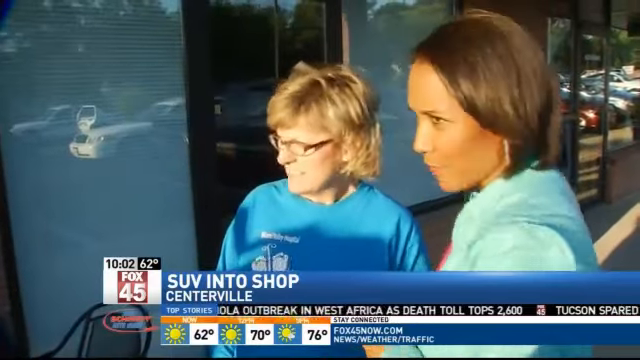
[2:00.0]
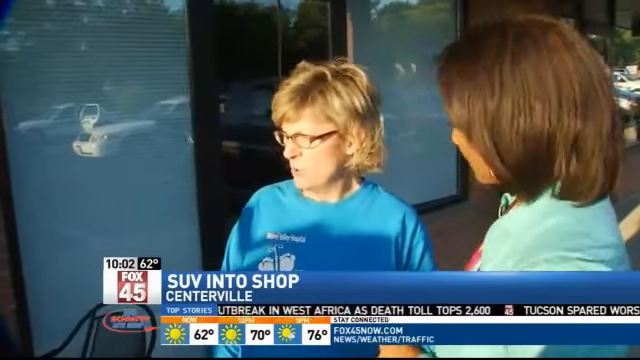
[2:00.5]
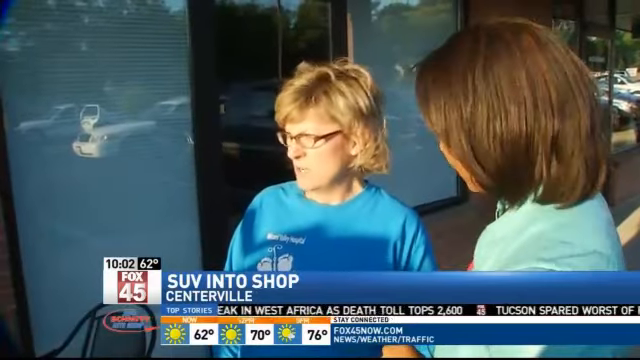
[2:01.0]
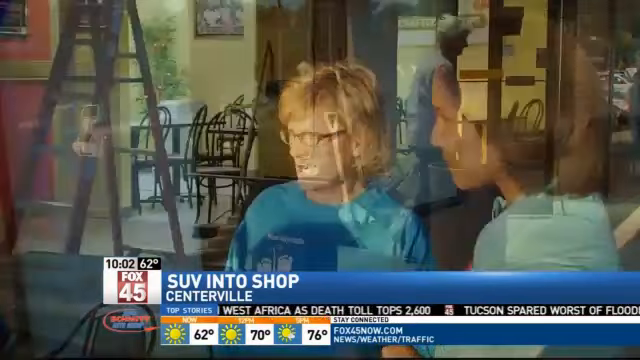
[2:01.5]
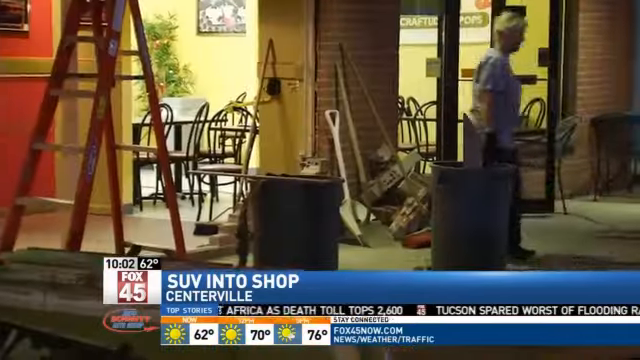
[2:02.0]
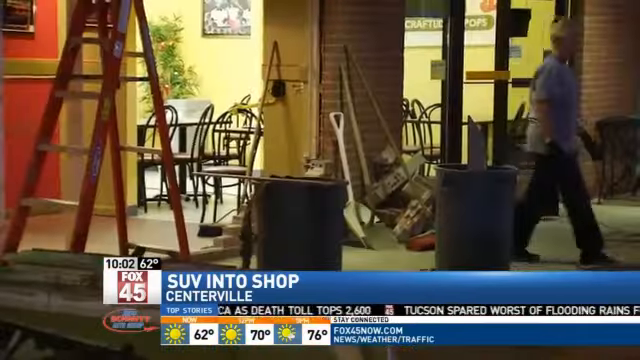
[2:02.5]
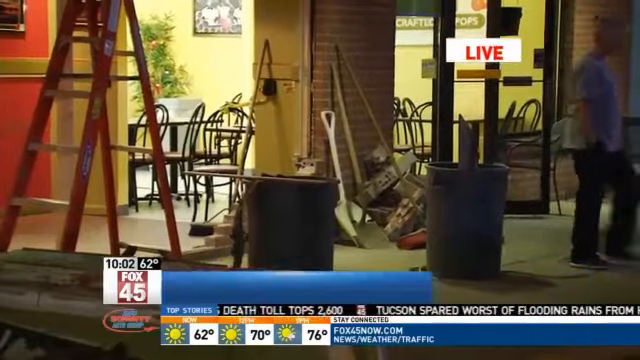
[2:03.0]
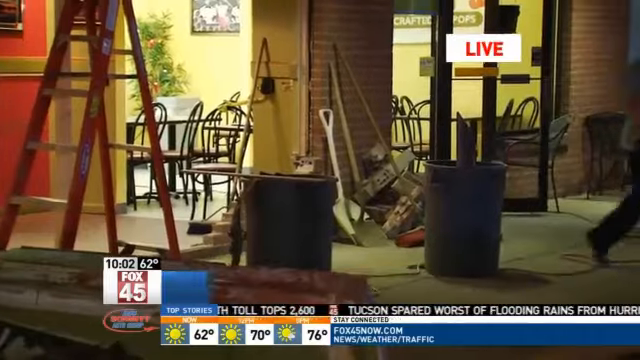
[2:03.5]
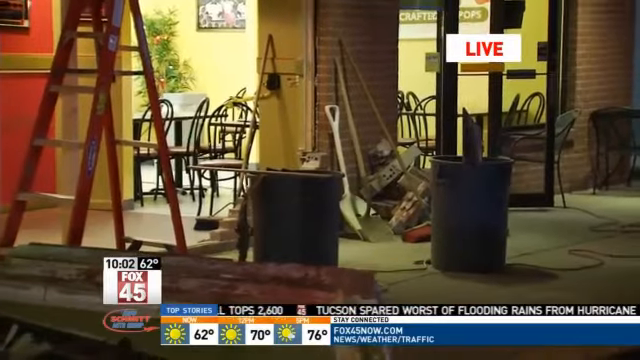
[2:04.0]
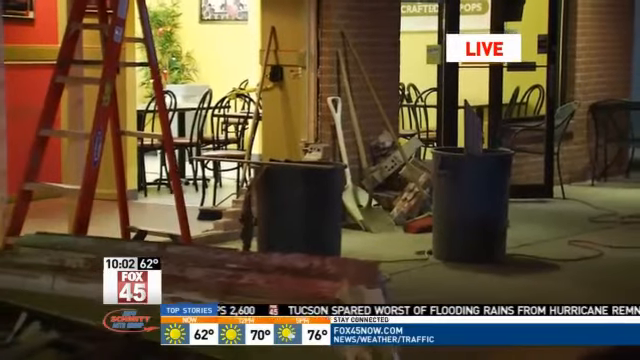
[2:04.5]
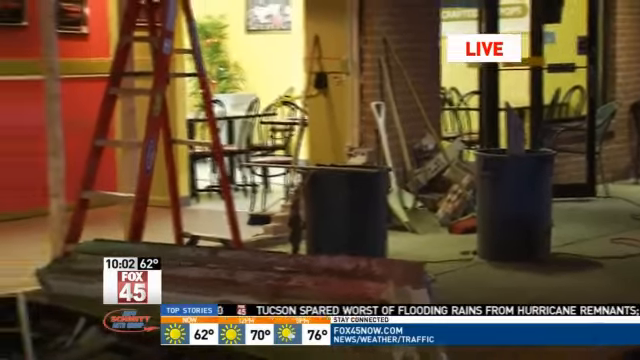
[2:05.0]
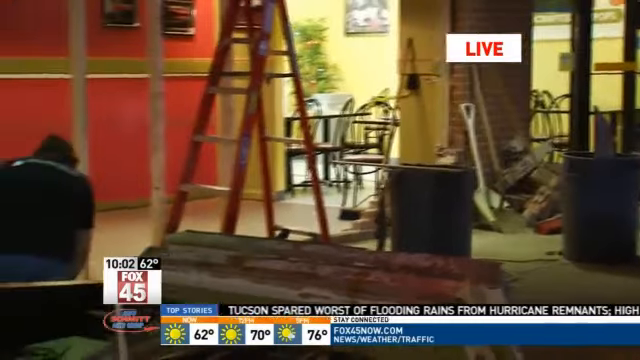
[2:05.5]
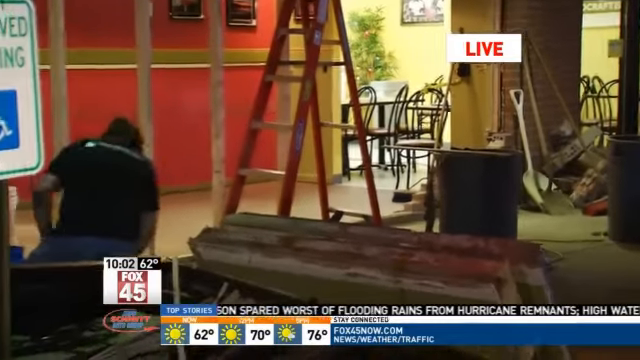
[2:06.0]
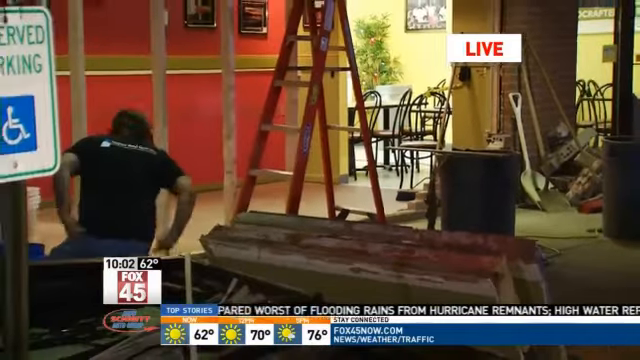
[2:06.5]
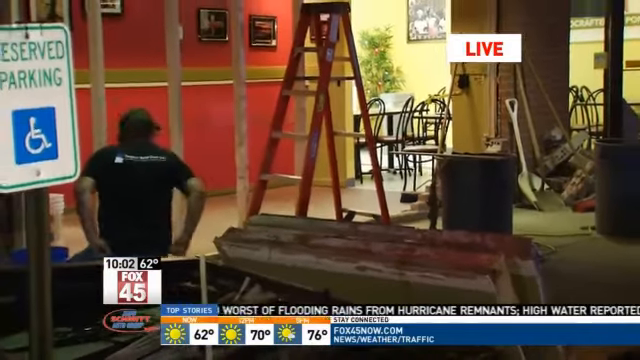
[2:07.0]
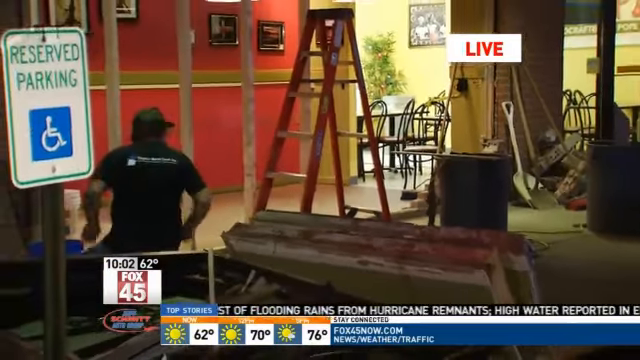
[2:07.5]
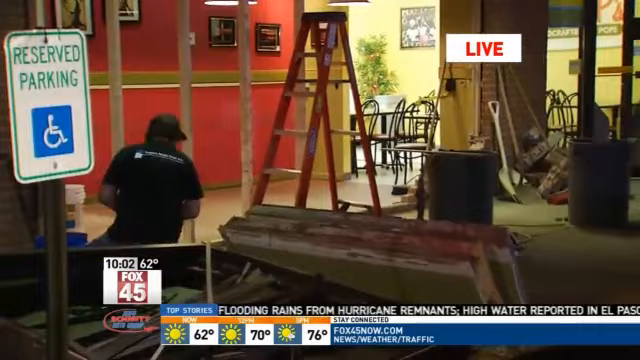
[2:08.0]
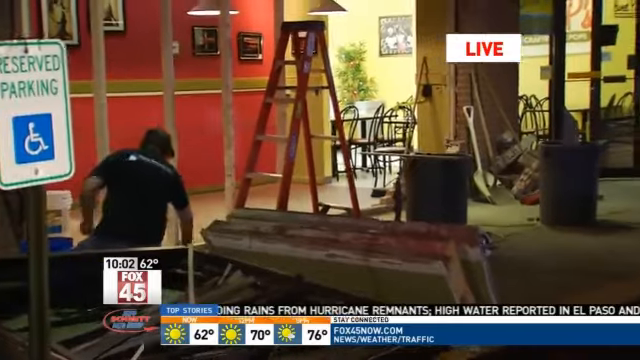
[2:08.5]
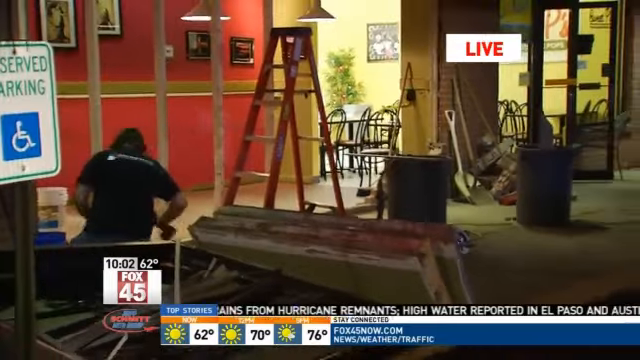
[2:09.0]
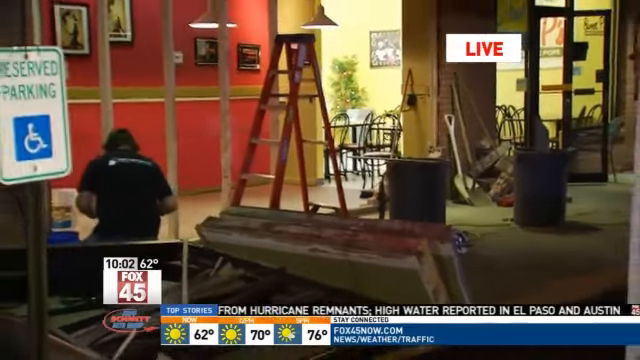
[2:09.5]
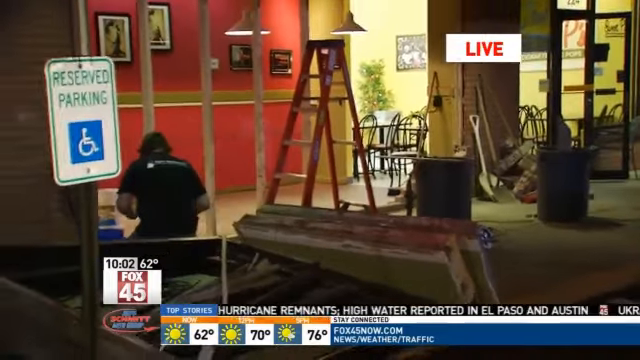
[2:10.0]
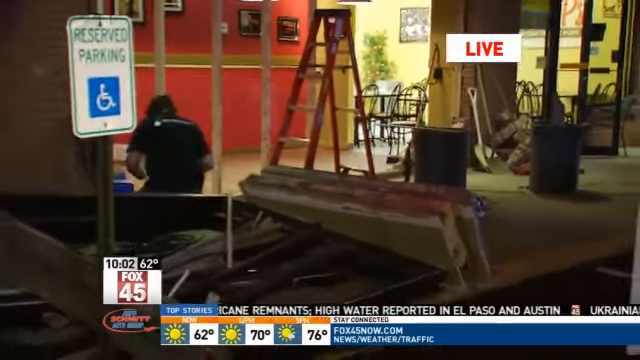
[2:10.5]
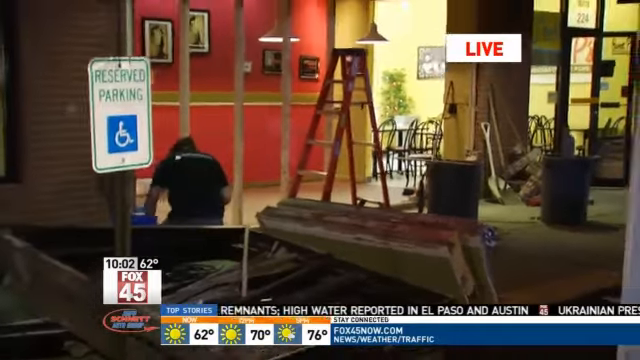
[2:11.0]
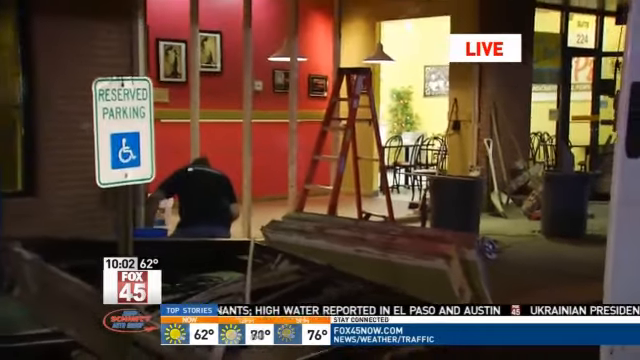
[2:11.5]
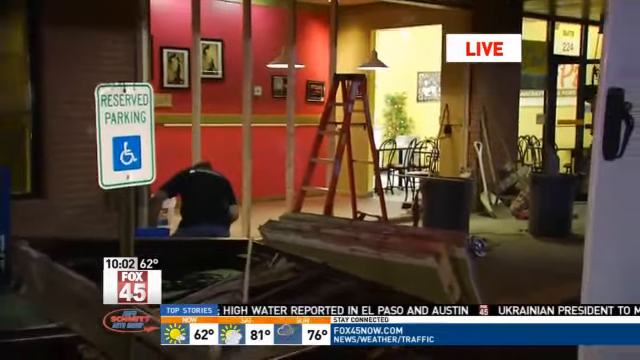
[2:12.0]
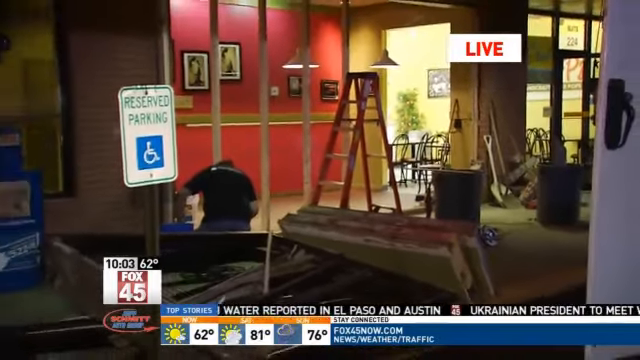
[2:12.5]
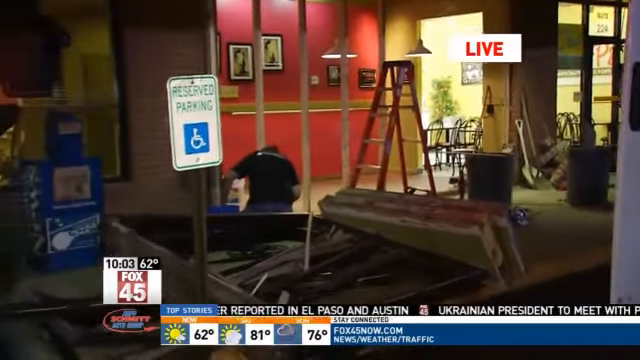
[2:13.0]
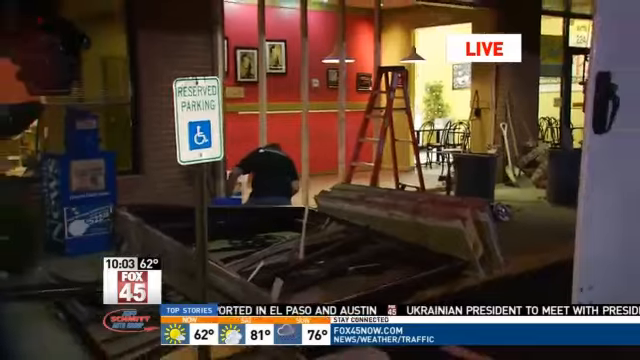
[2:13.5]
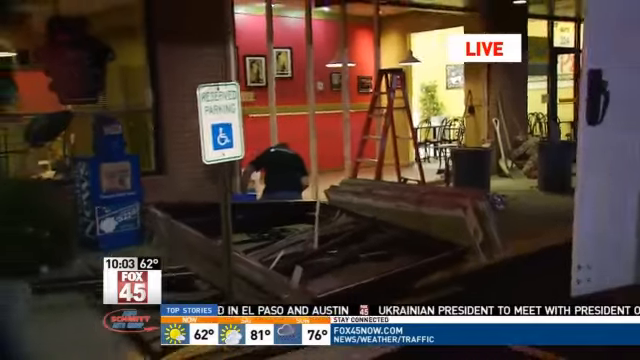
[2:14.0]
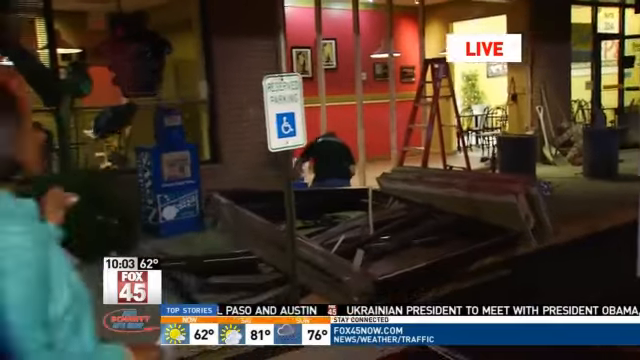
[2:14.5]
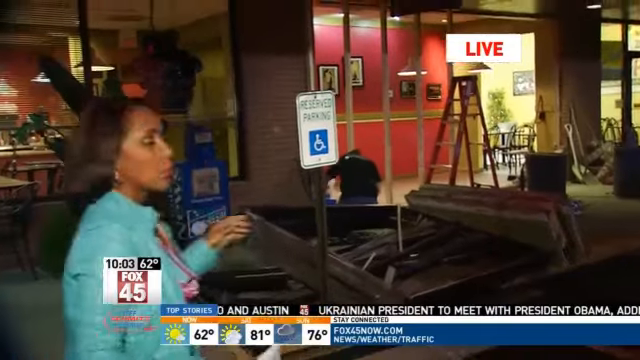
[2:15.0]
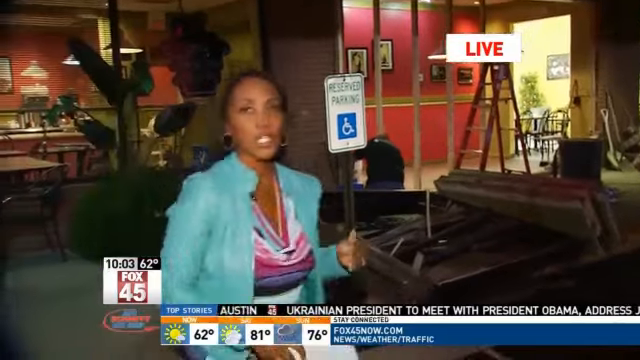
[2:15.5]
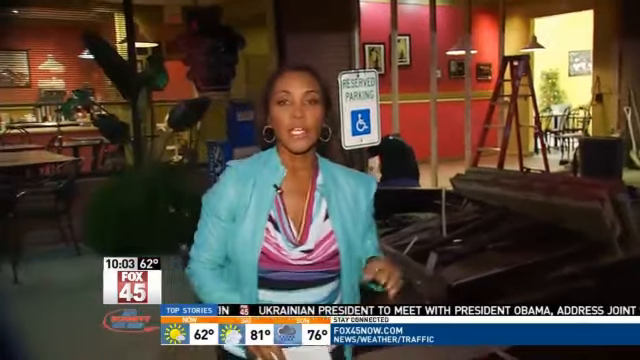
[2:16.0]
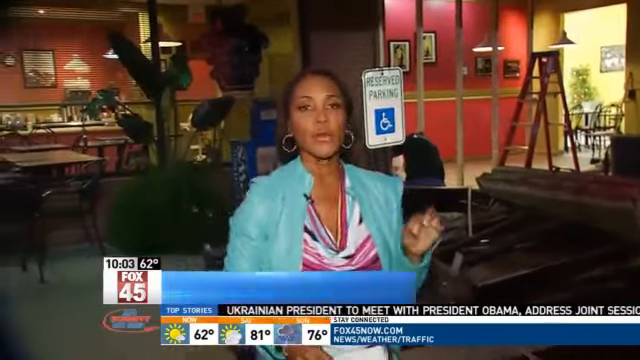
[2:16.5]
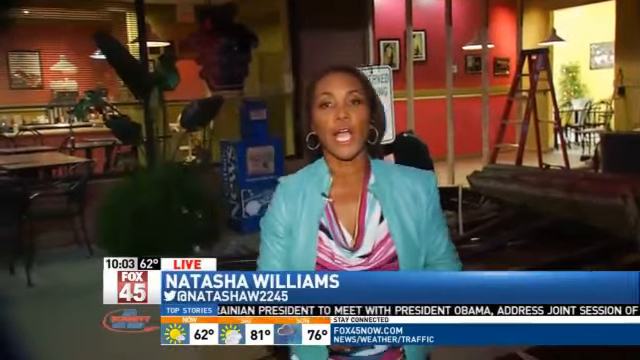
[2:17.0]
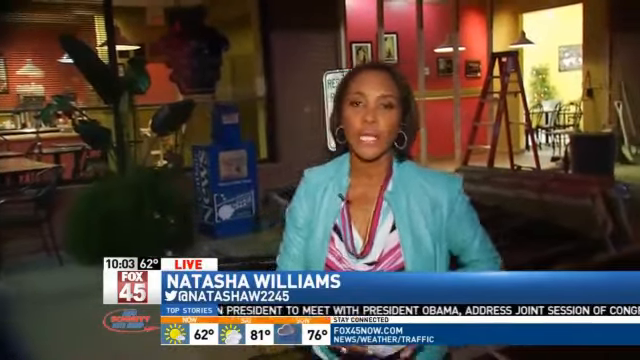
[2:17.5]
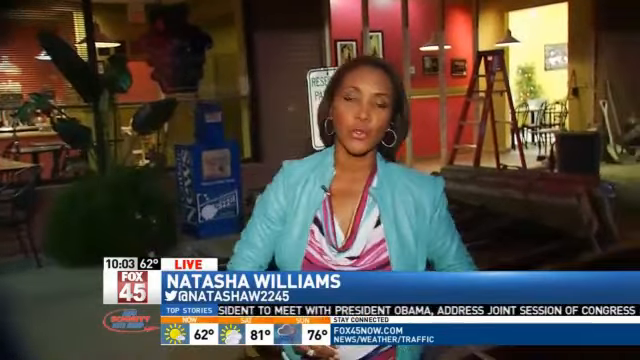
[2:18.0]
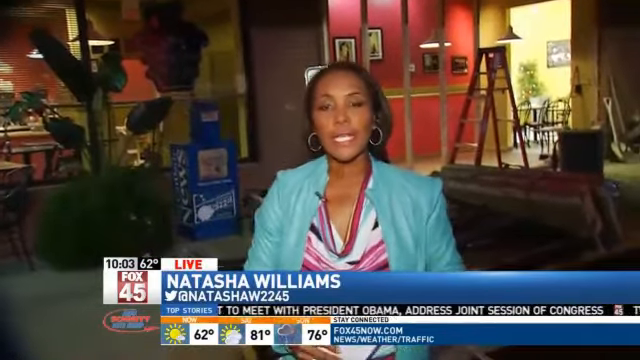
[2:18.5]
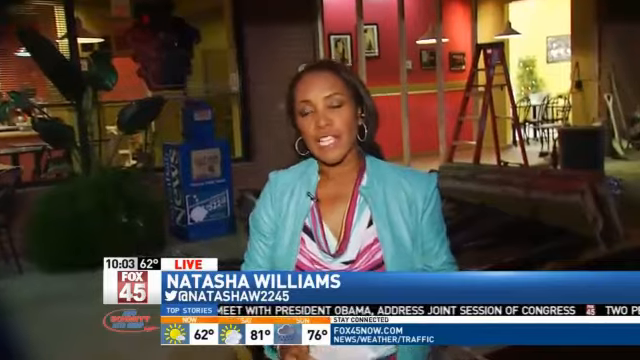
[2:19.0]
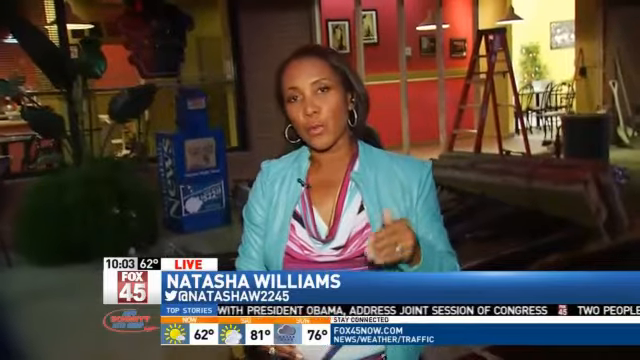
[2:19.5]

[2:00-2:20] The Fox 45 News report on an SUV into a shop in Centerville shows 10:02 and 62 degrees. Information scrolls along the bottom from right to left, and underneath it is the forecast for the day: full sunshine and 62, 70 and 76. A reserved parking sign is in front of the shop, which has red walls. Men inside are fixing the interior, putting up beams, with a ladder and hanging lights. It looks like it is now nighttime. Natasha Williams, a pretty black woman wearing a green shirt over a multicolored top, is reporting and uses her left hand as she speaks. The video cuts off while Natasha is speaking to the bagel shop employee's mom; both are looking in the same direction, at the place where the accident happened.